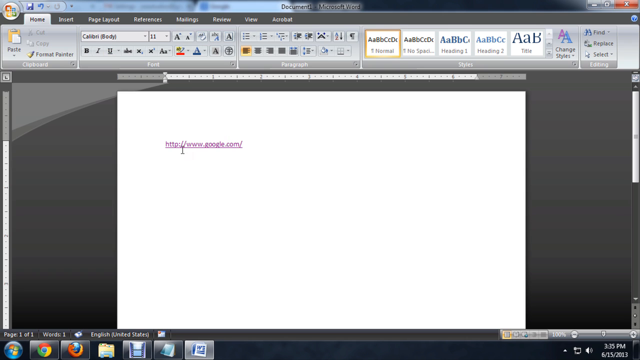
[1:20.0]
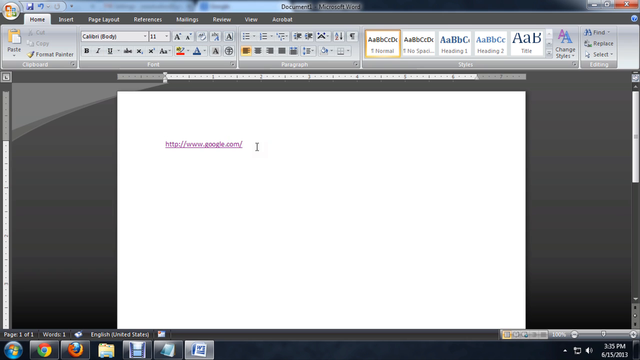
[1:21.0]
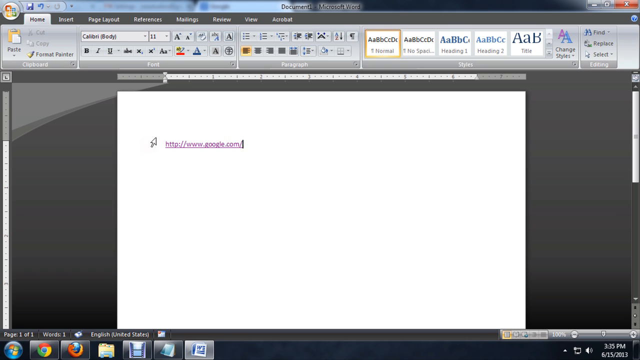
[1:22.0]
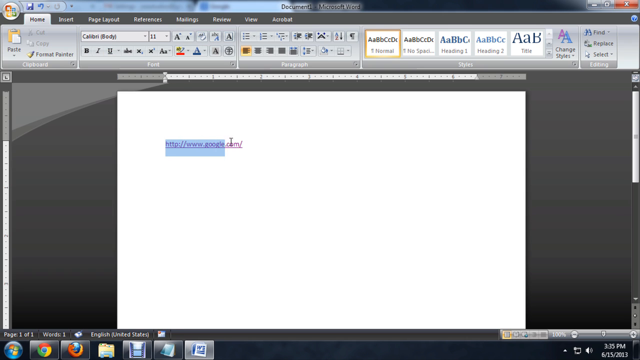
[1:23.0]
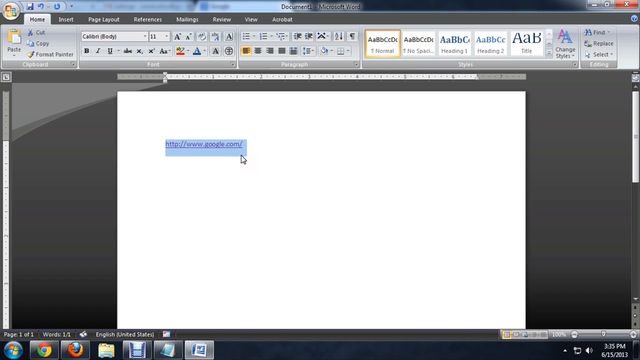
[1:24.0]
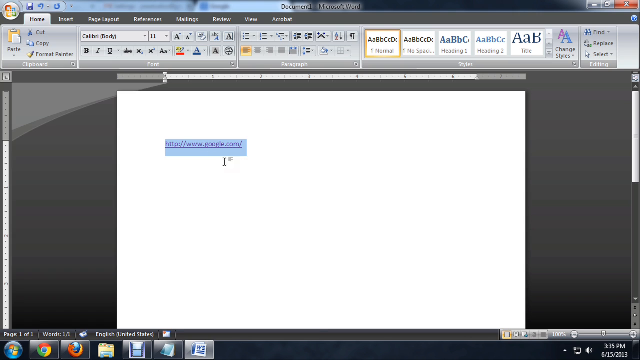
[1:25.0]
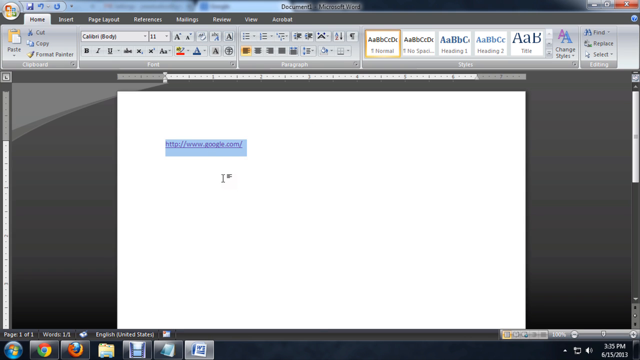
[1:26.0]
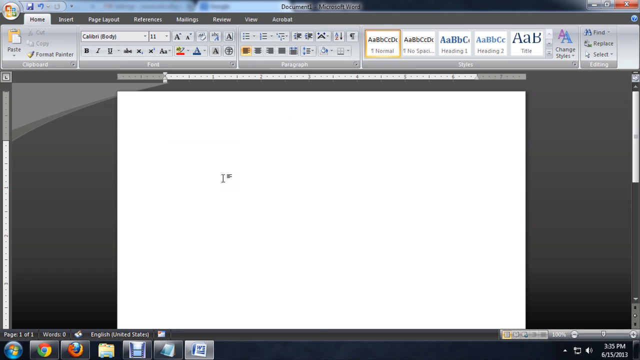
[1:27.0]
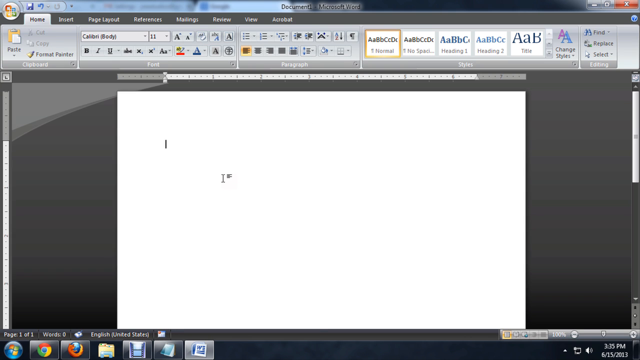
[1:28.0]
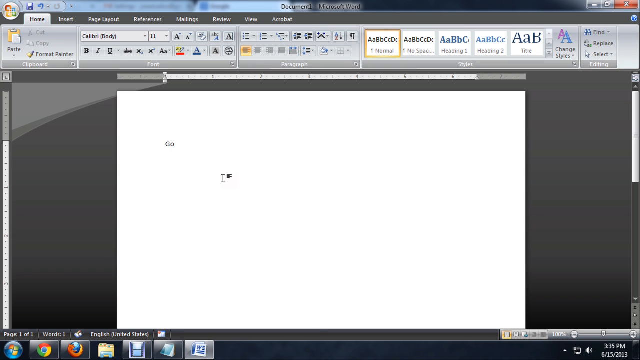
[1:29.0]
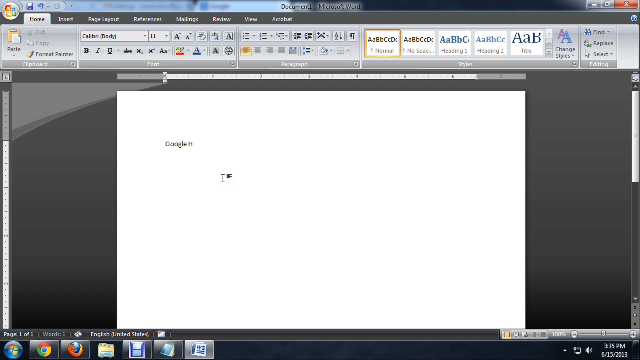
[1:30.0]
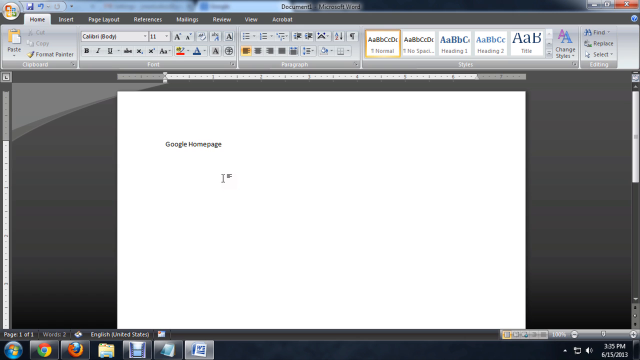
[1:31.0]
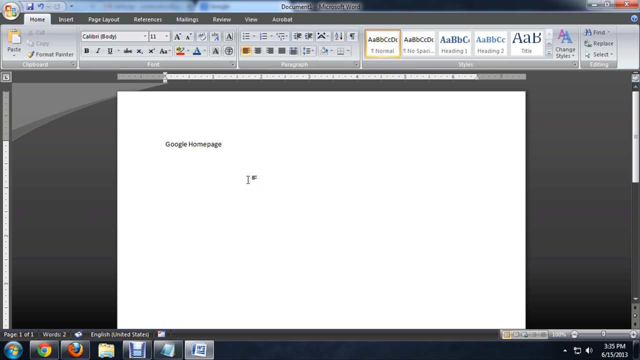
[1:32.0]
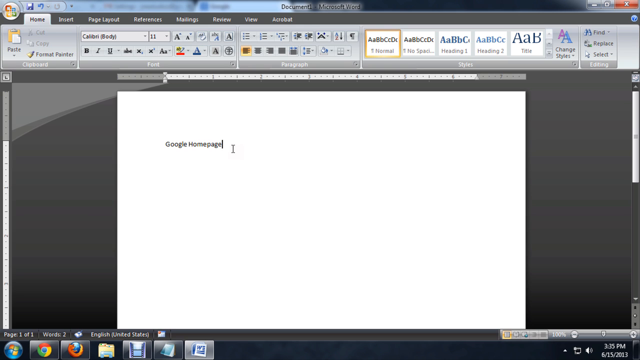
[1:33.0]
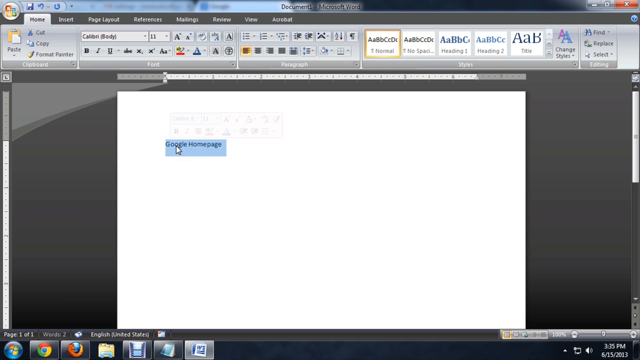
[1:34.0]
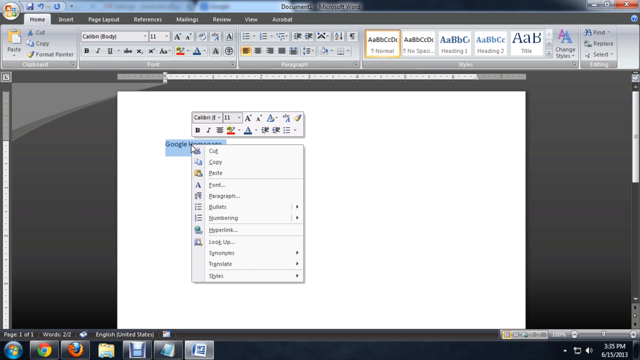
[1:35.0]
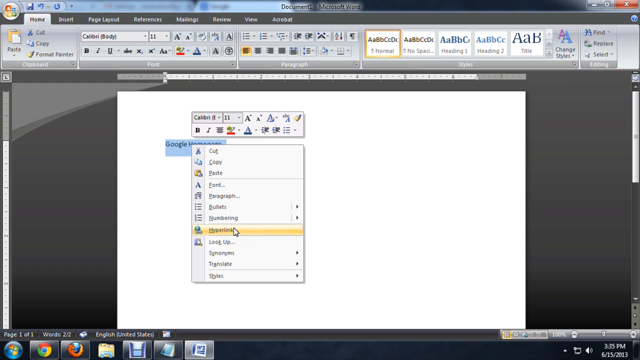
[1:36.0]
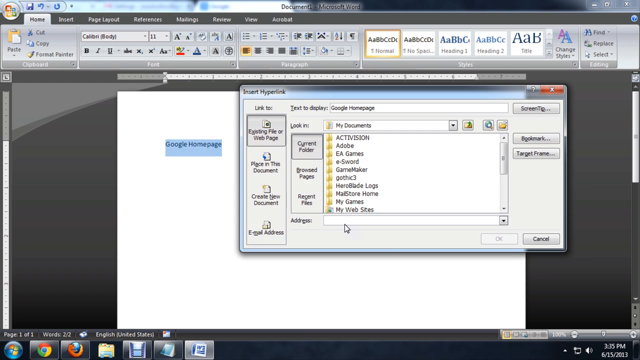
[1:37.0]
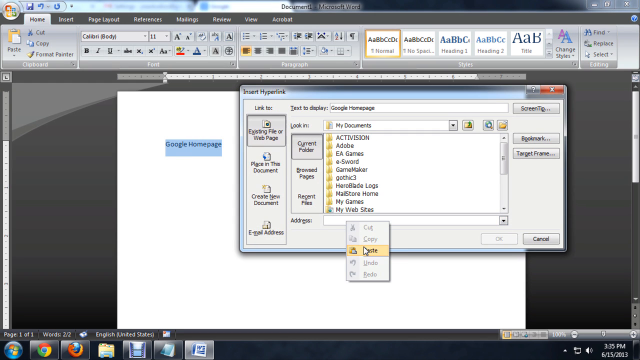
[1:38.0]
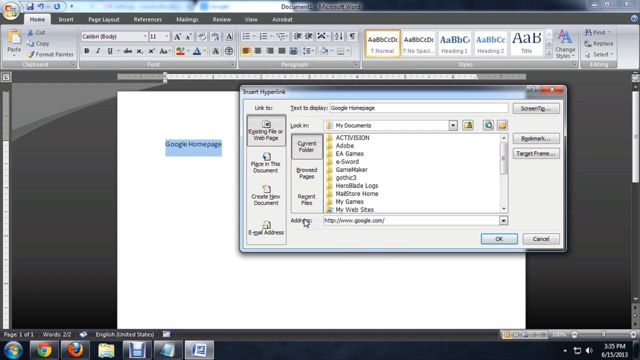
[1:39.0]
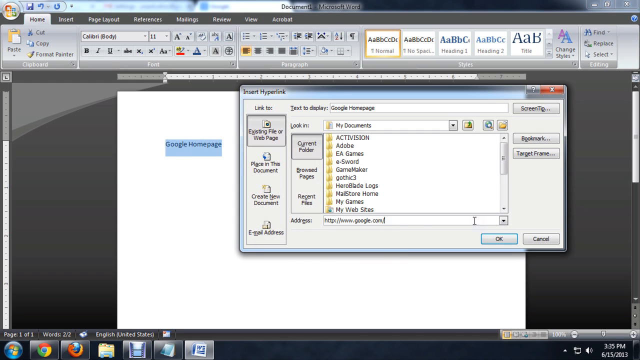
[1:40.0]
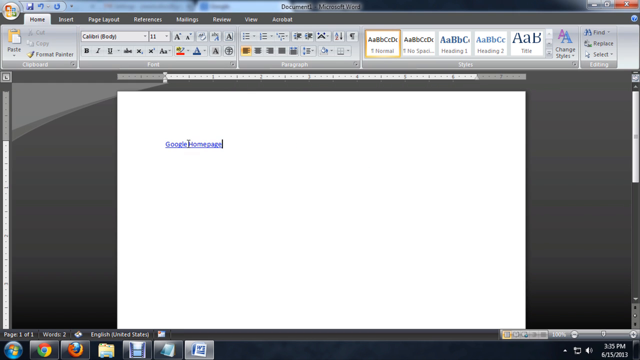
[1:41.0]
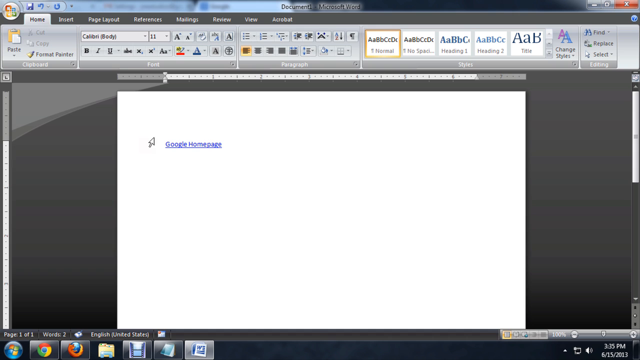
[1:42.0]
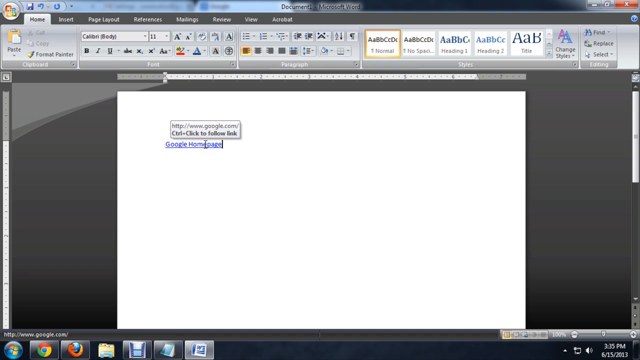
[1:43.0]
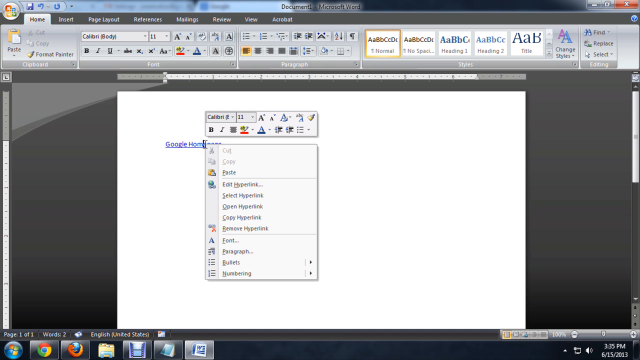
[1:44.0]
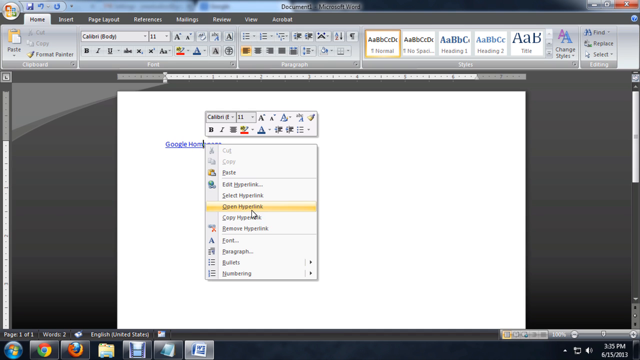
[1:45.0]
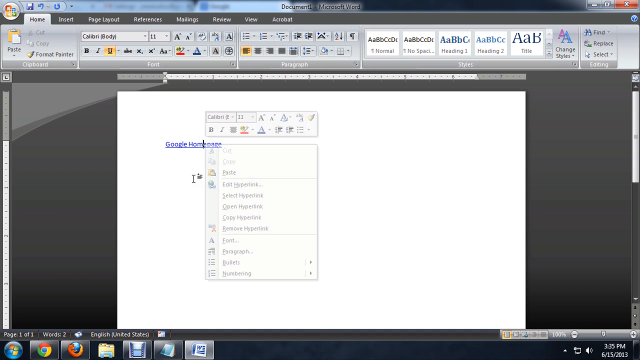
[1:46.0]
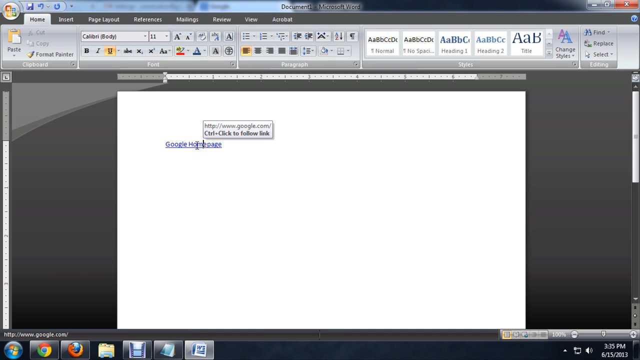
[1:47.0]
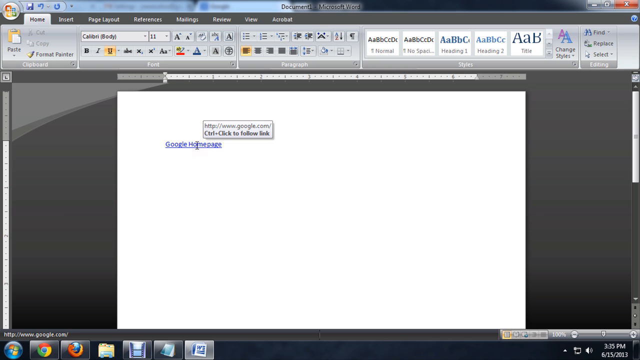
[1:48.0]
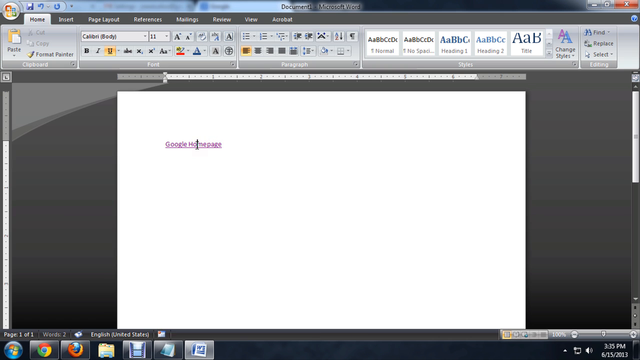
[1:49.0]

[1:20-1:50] He moves the cursor over the Google hyperlink in the Word document and highlights it, jittering the cursor over it before deleting the hyperlink. He types the words "Google homepage" into the Word document, highlights them, right-clicks, and clicks hyperlink. The Insert Hyperlink tab opens, and he pastes google.com from the clipboard into the empty address field. He moves the mouse down to OK and clicks it. The window closes, and he moves the cursor over "Google homepage," which is now a hyperlink, turned blue from a normal gray color. He hovers over the hyperlink and right-clicks it, shows some of the options that open, and then closes the right-click menu. He moves the mouse back up to Google homepage on the screen.